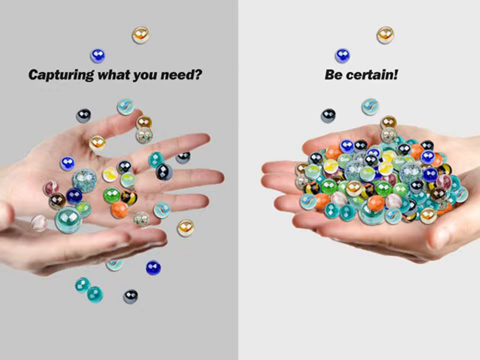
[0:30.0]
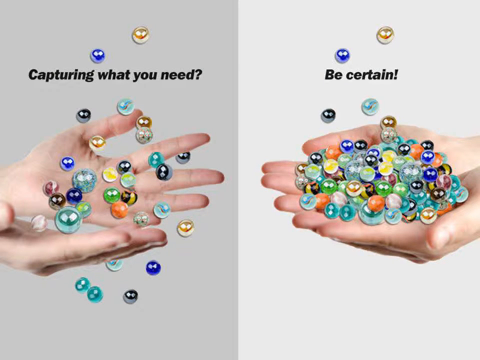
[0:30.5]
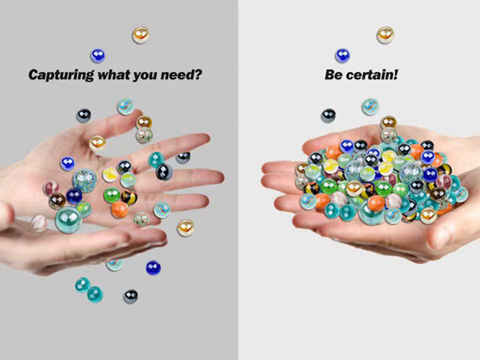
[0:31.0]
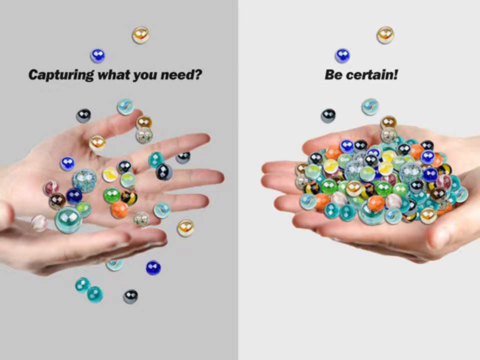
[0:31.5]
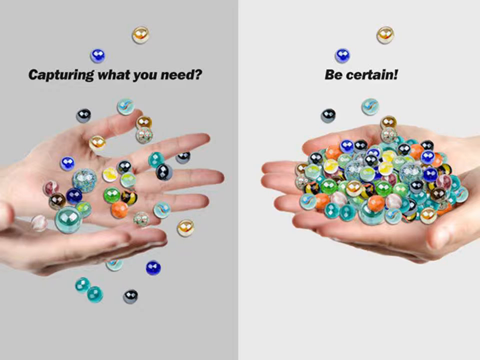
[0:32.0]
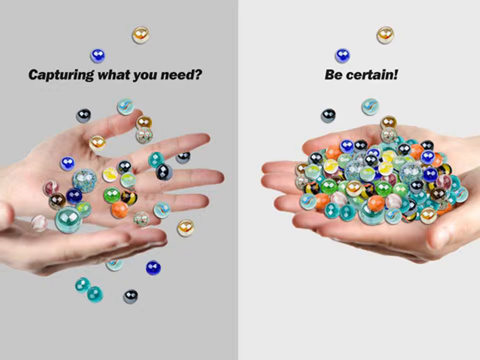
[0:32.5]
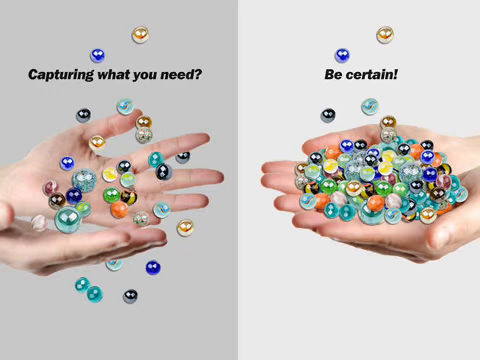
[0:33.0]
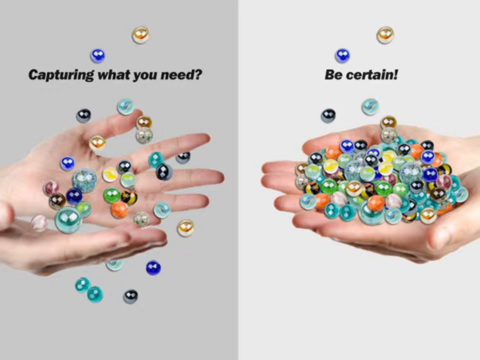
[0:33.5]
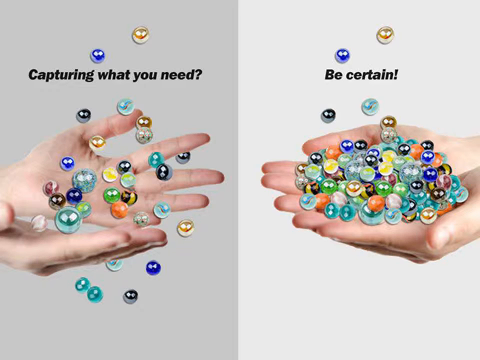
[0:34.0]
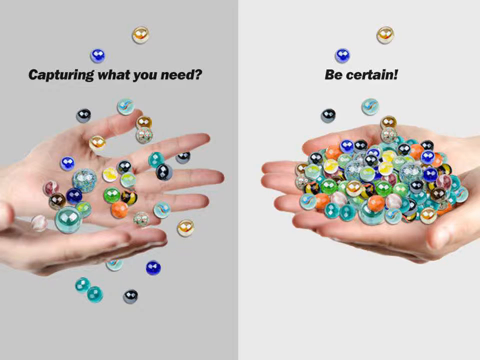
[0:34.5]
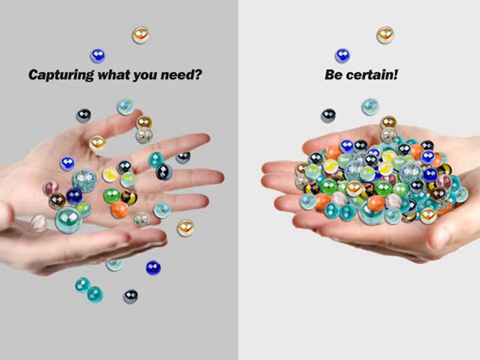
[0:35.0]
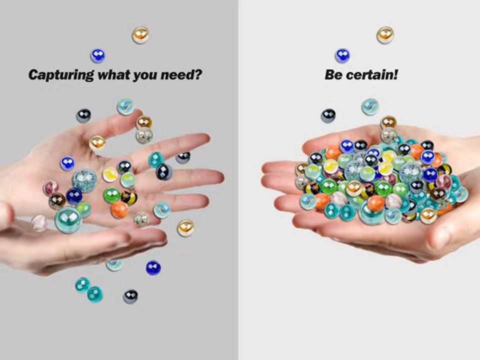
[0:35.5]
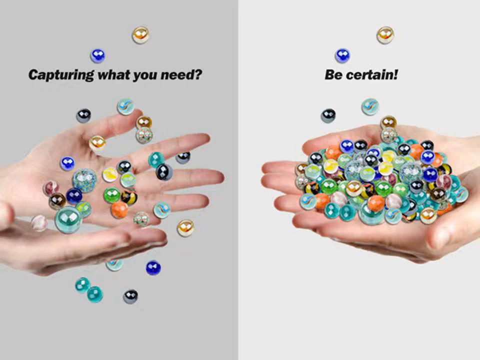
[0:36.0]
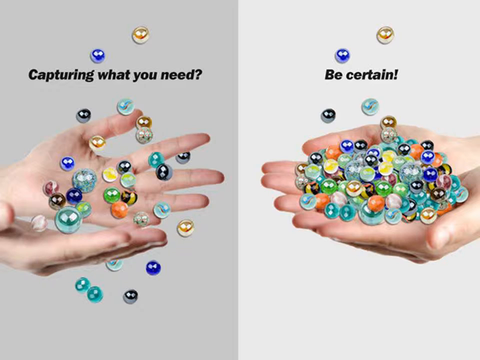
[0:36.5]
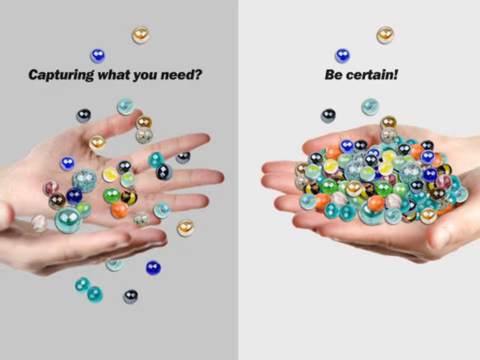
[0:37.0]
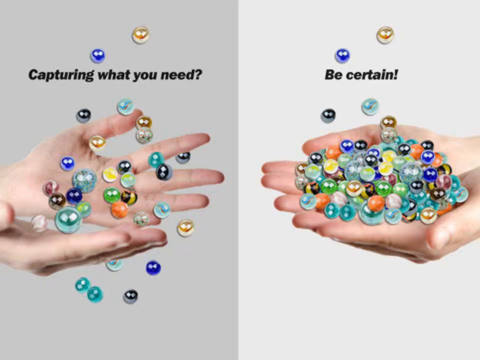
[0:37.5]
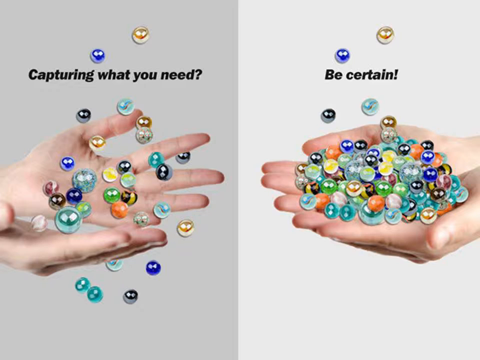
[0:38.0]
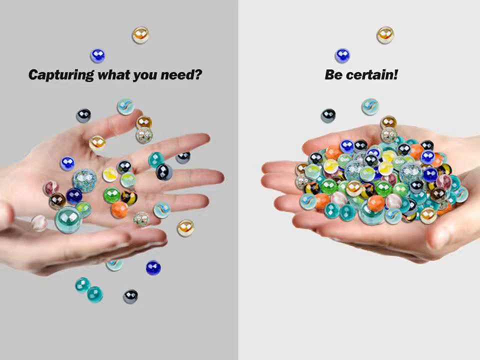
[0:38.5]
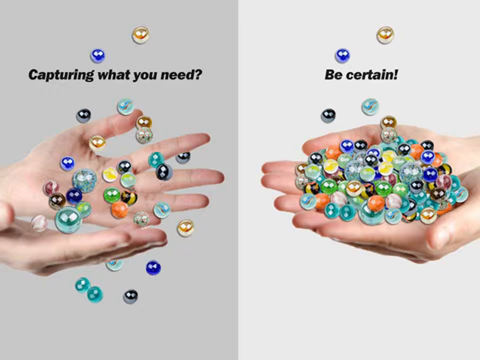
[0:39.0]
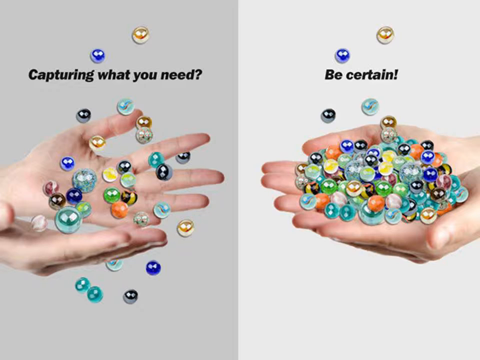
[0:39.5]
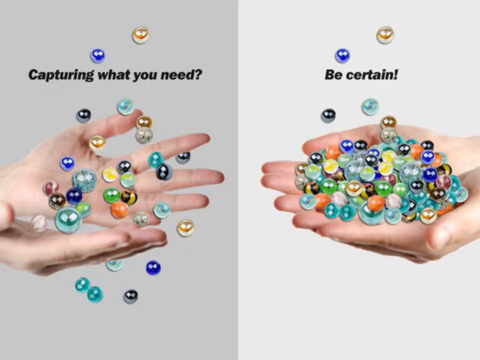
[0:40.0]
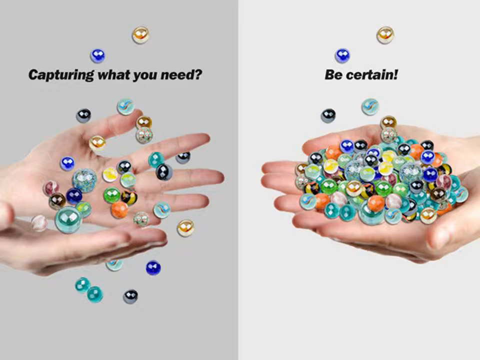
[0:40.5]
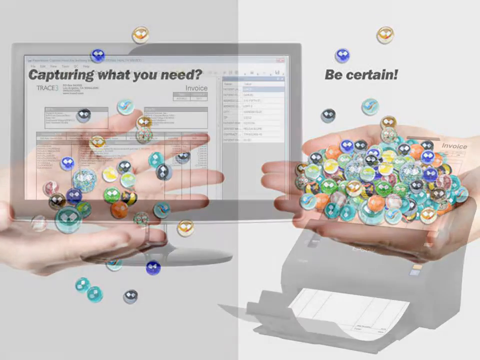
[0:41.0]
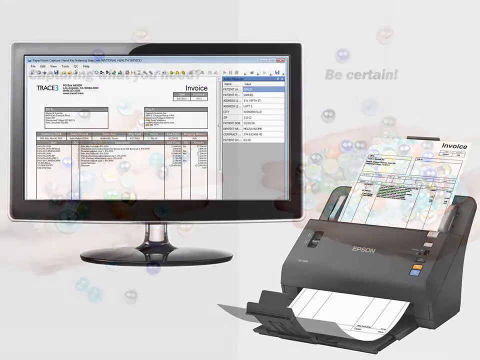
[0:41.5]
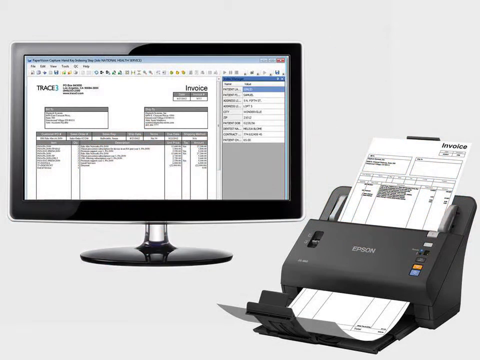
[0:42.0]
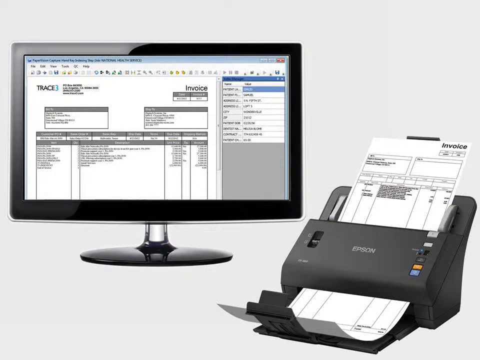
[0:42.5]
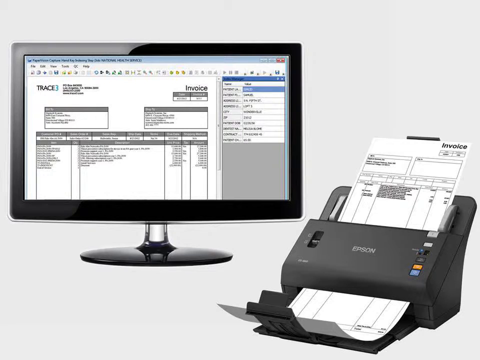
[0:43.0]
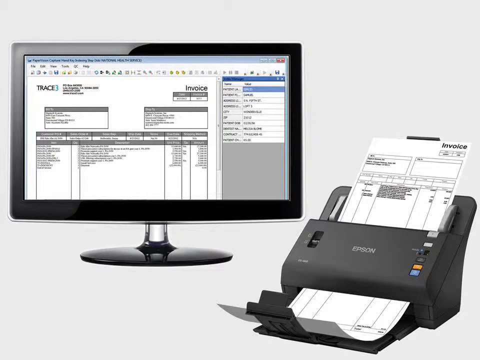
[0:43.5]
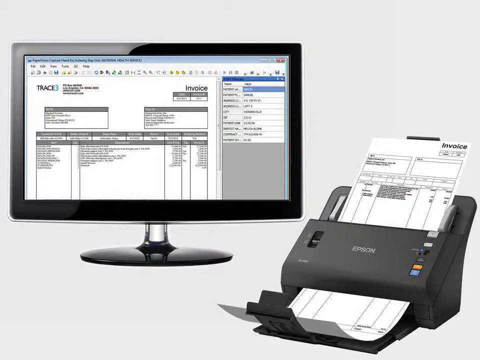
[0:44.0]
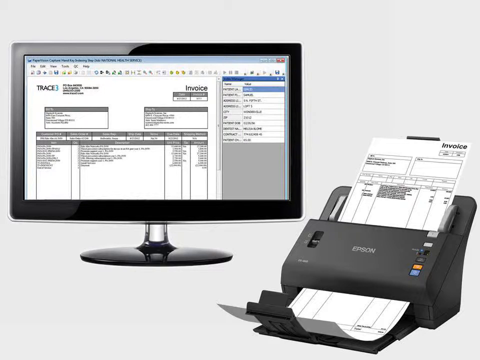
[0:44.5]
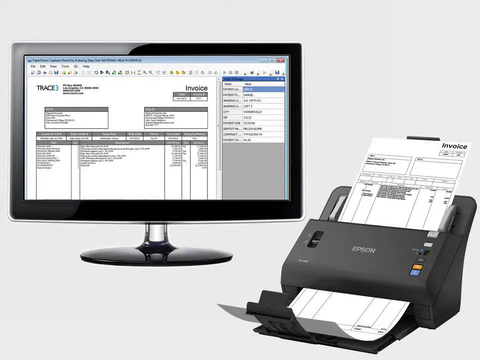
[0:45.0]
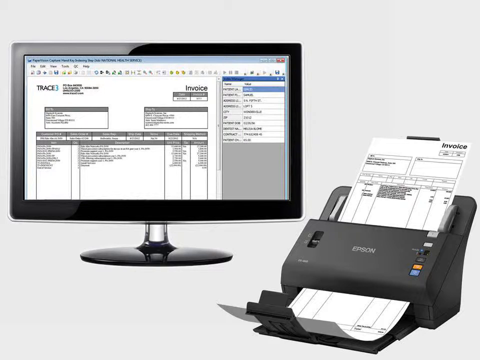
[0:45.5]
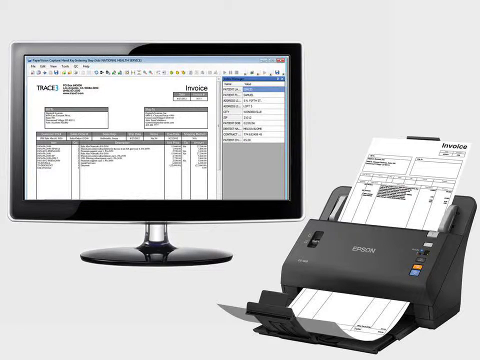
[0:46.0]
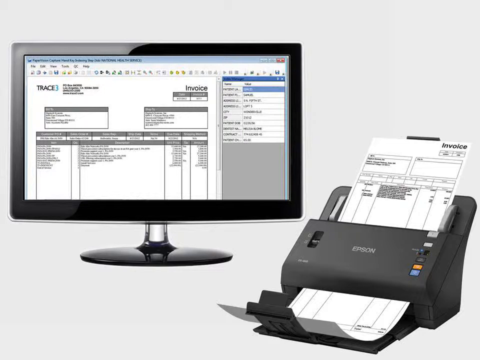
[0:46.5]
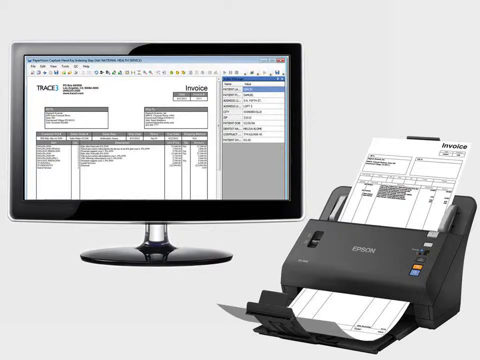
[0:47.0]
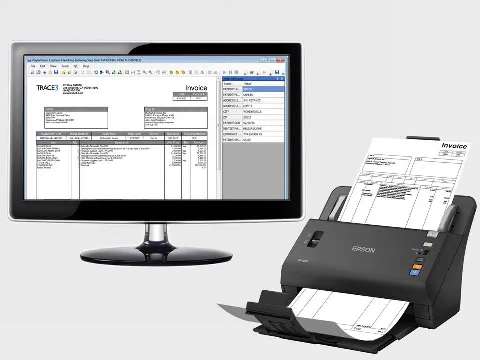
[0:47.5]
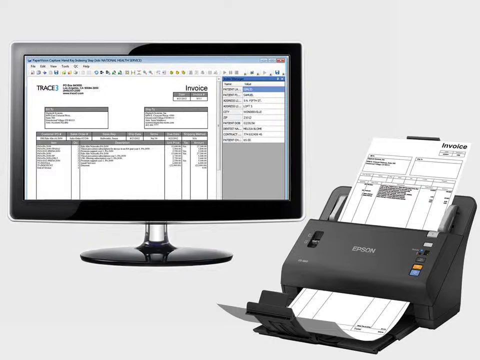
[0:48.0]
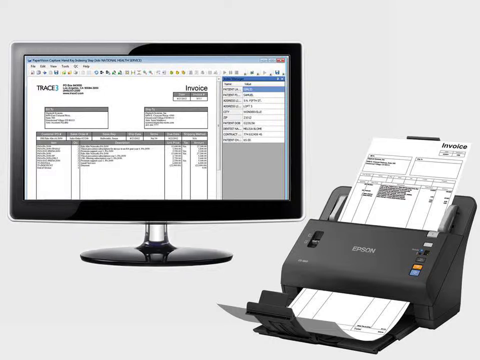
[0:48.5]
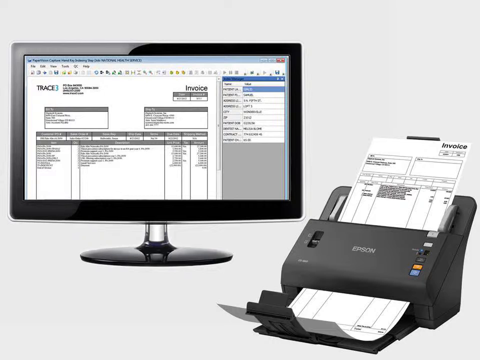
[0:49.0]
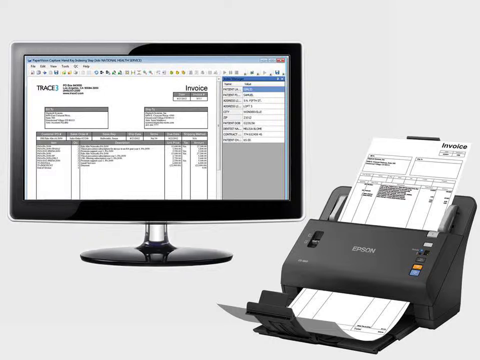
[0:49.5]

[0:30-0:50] The screen is split vertically down the middle. On the left, against a black, light gray background, two white hands stick out palms up, with many illustrated, CGI, cartoonish-looking marbles in the air above the hands, on the hands and underneath them. Black text at the top reads "capturing what you need". On the right, two more white hands hold a big pile of multicolored marbles, with black text above them reading "be certain". Next, a black computer monitor appears, with a clear-looking, partially transparent pole running from the base to the monitor. A software program on the monitor shows "invoice" in the top right corner and "trace three" in the top left corner. A black Epson printer in the bottom right corner appears to be printing out an invoice.